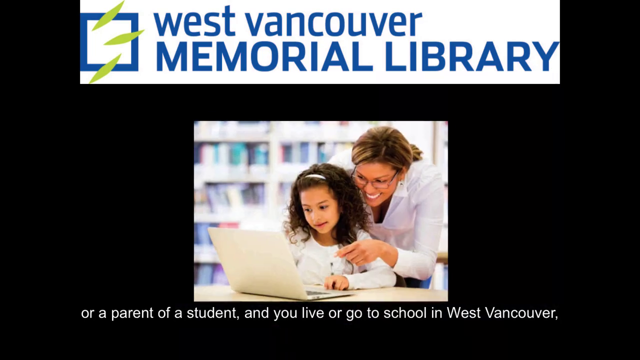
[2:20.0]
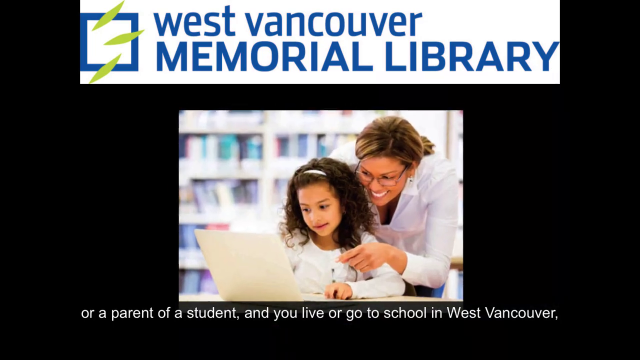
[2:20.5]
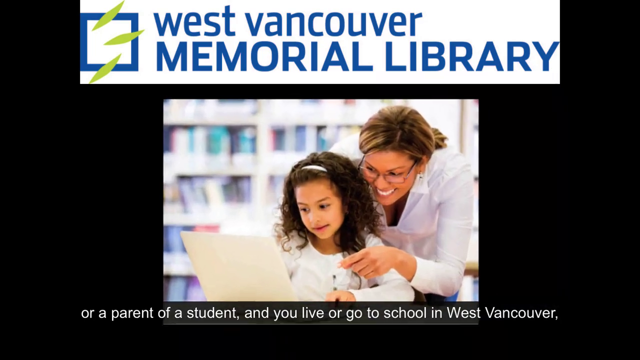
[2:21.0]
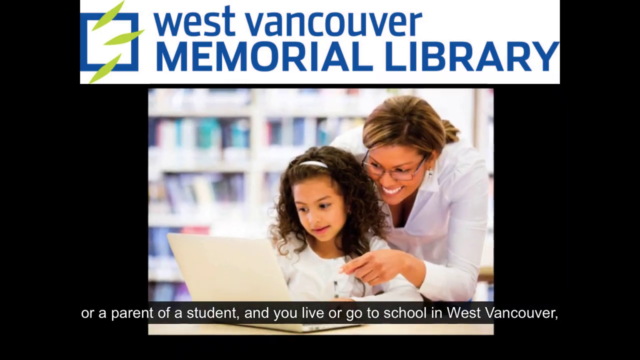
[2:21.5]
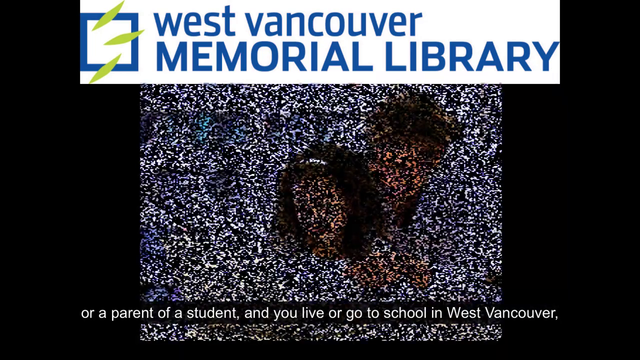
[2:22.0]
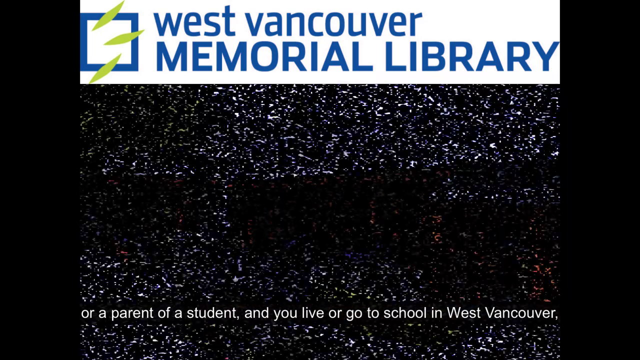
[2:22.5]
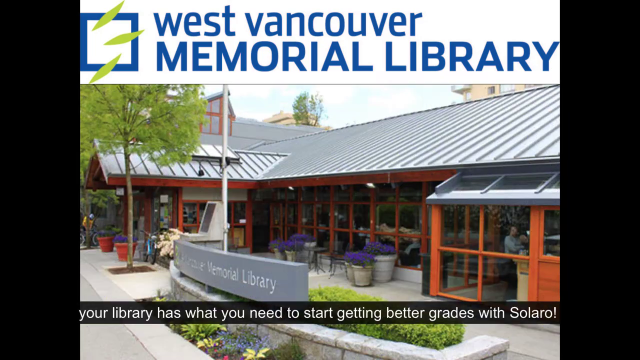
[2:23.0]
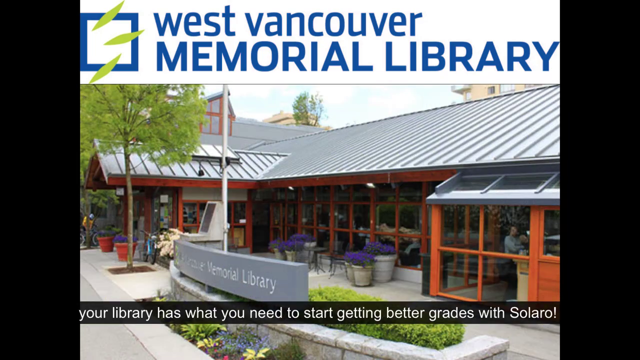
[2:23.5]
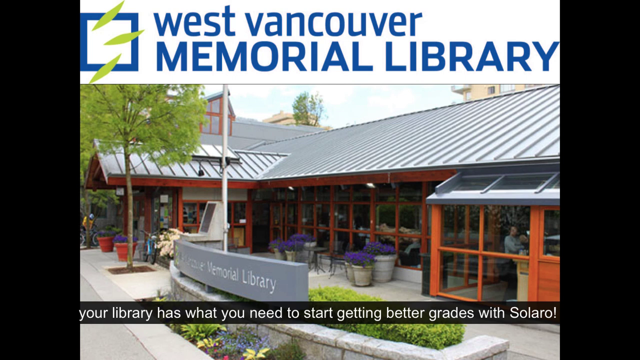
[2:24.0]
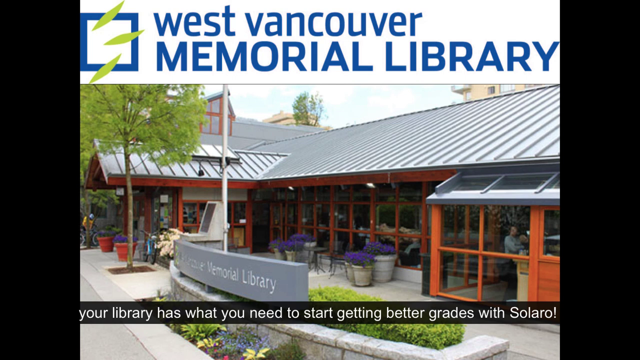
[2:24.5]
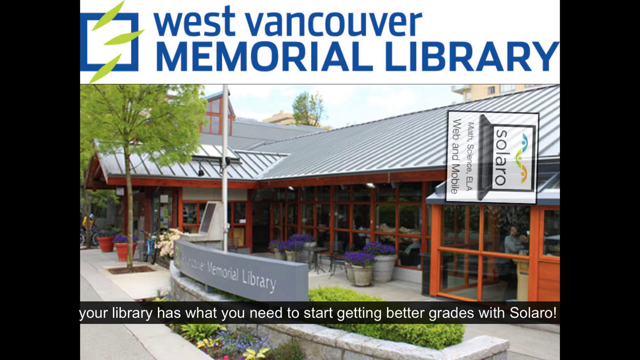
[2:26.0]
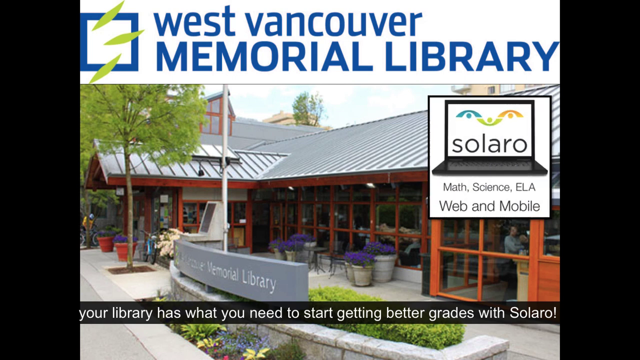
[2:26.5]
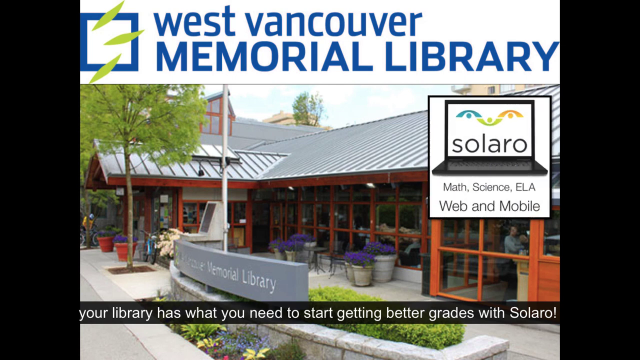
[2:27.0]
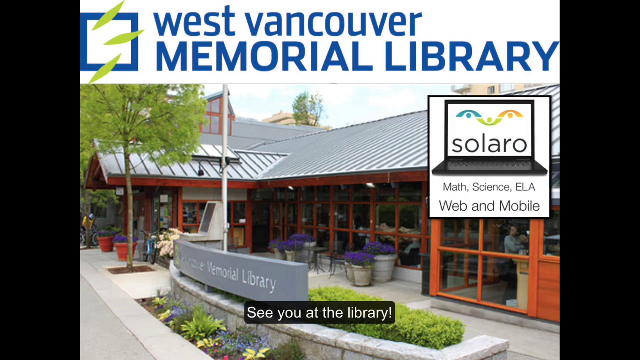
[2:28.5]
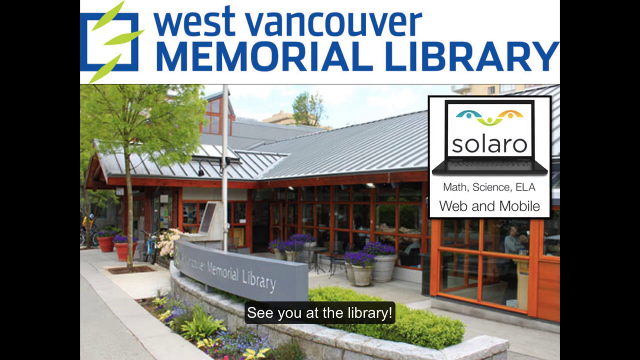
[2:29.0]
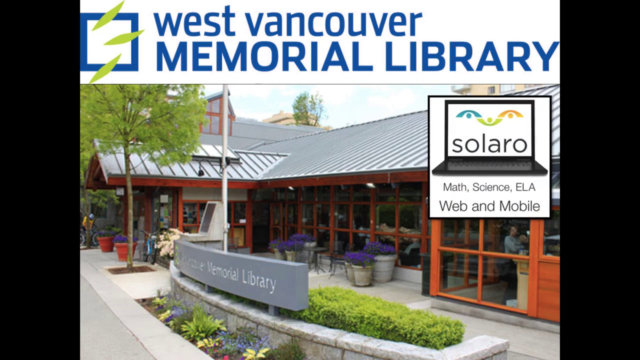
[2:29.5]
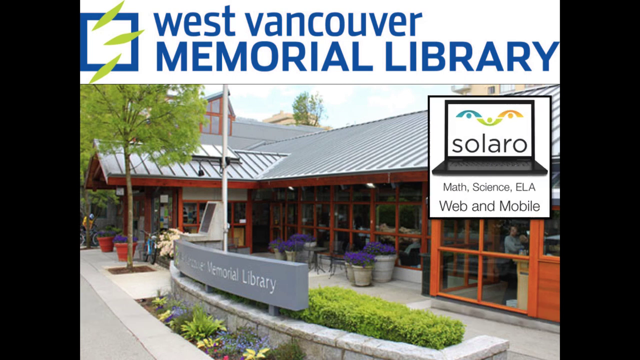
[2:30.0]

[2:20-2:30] A header reading "West Vancouver Memorial Library" appears on a black screen with an image of a young girl behind a laptop; she is kind of mixed-looking with curly hair. Behind her, grasping her, is a woman, probably around 30, who is kind of probably her mother or a teacher, with glasses, curly blondish brown hair and a white shirt. The text mentions a parent or a student who lives or goes to school in West Vancouver. The video then moves to another screen showing the West Vancouver Memorial Library, with text saying "your library has what you need to start getting better grades with Solaro".